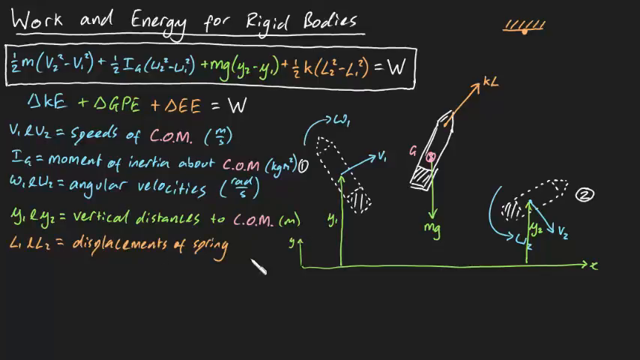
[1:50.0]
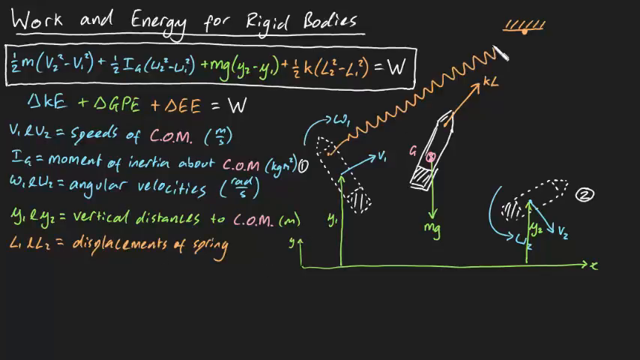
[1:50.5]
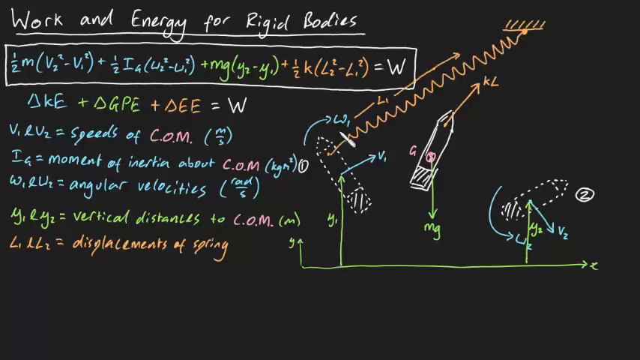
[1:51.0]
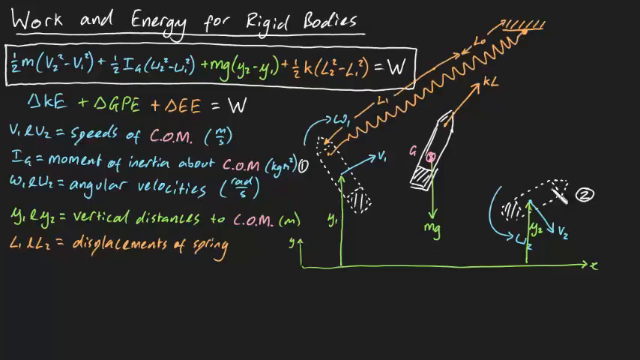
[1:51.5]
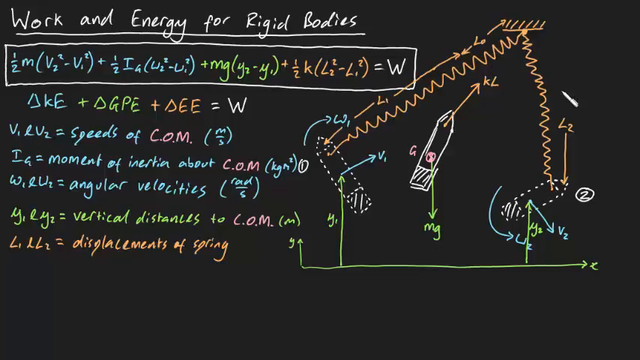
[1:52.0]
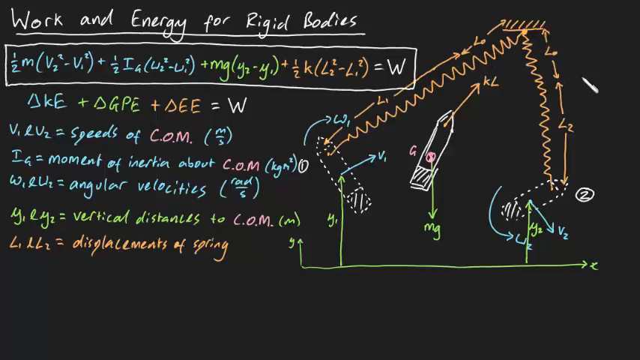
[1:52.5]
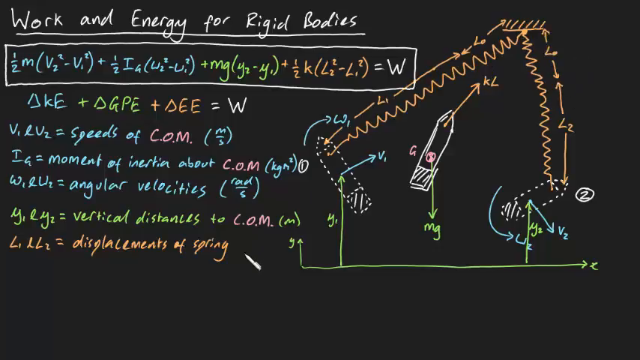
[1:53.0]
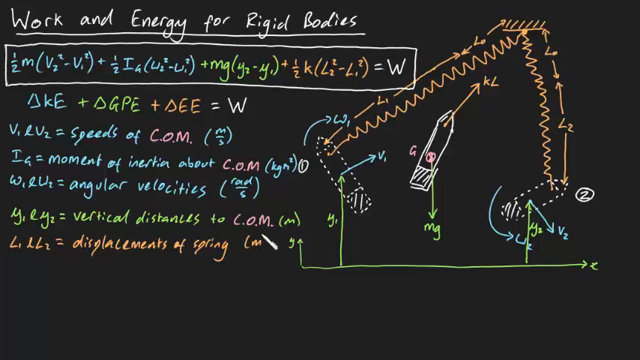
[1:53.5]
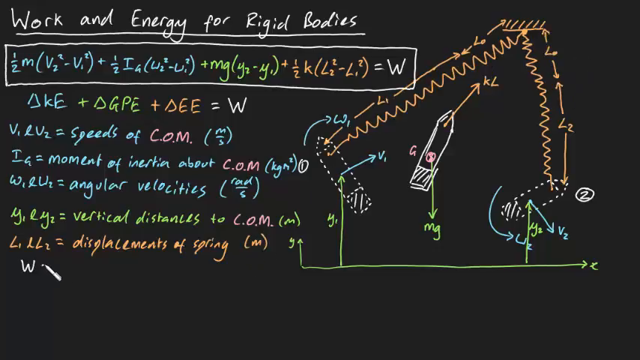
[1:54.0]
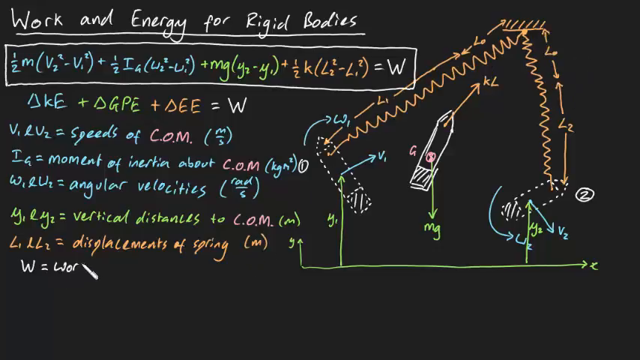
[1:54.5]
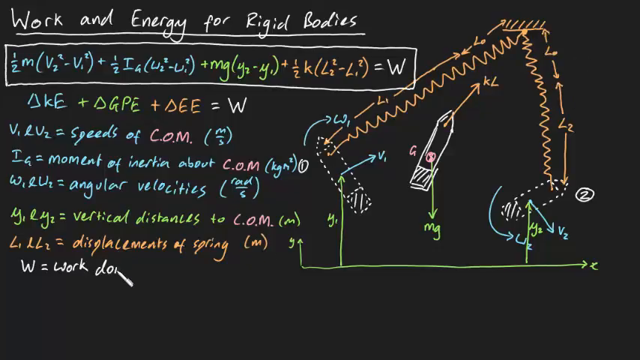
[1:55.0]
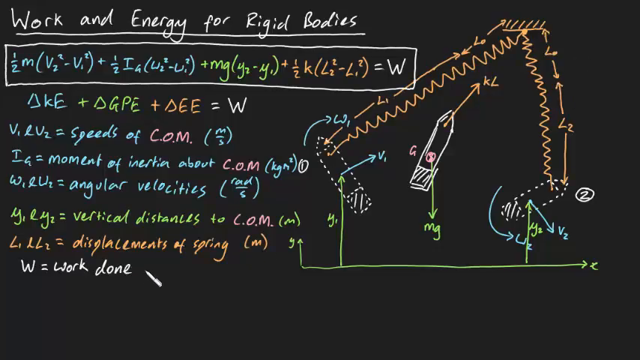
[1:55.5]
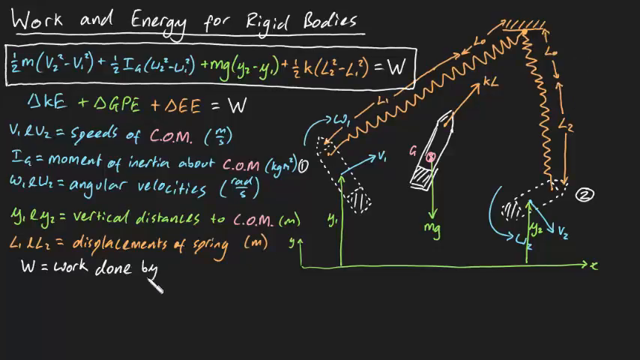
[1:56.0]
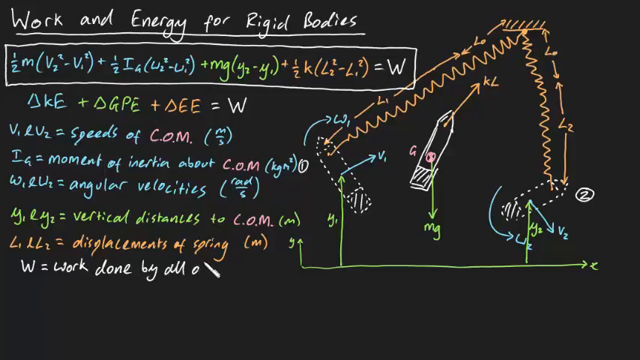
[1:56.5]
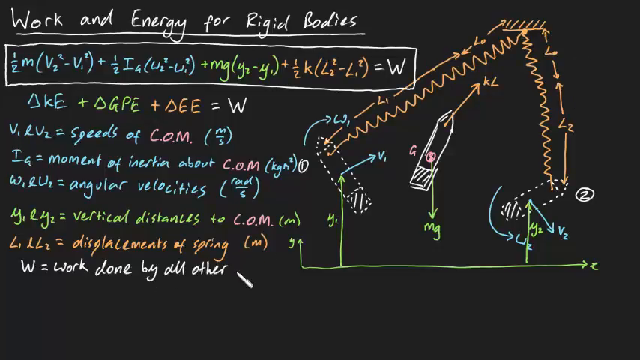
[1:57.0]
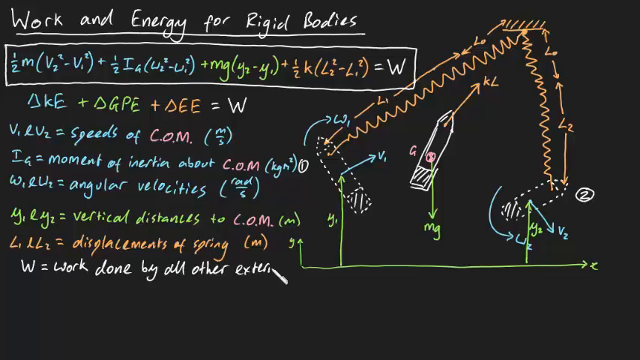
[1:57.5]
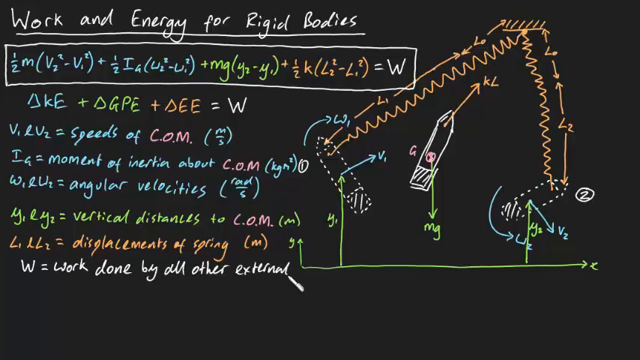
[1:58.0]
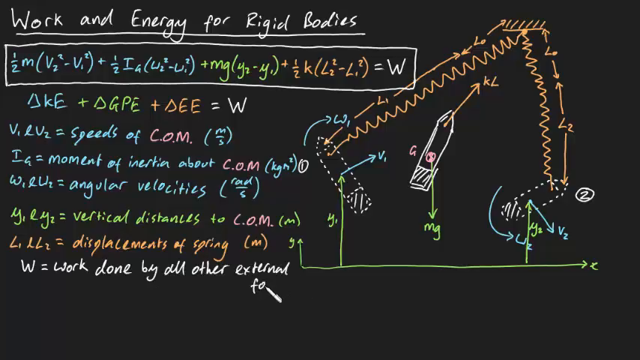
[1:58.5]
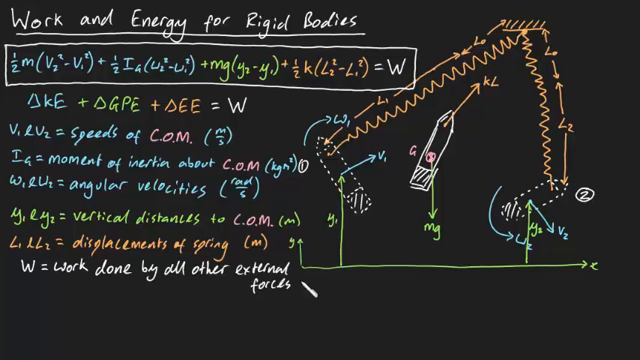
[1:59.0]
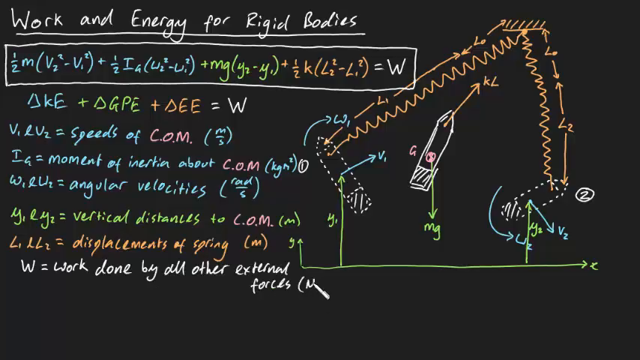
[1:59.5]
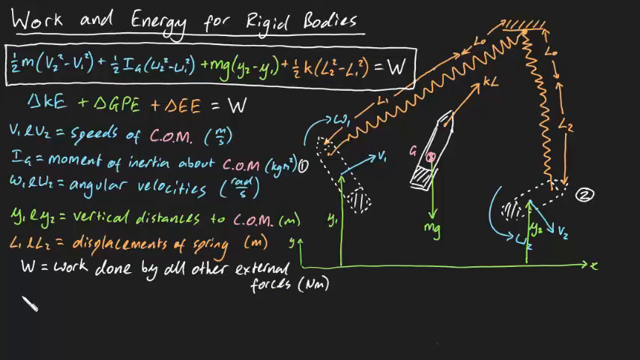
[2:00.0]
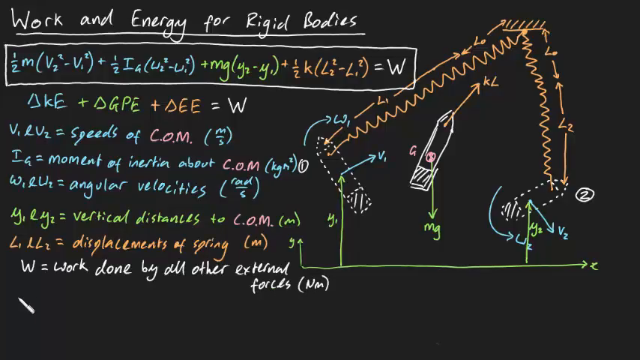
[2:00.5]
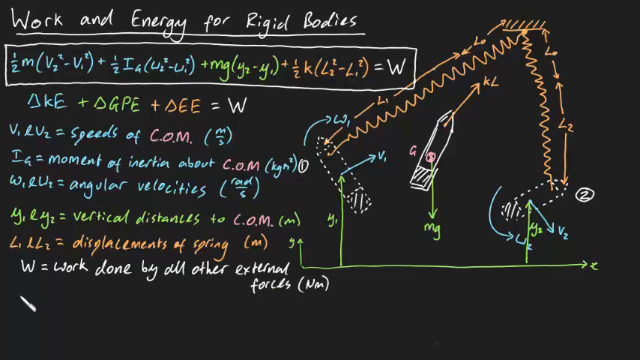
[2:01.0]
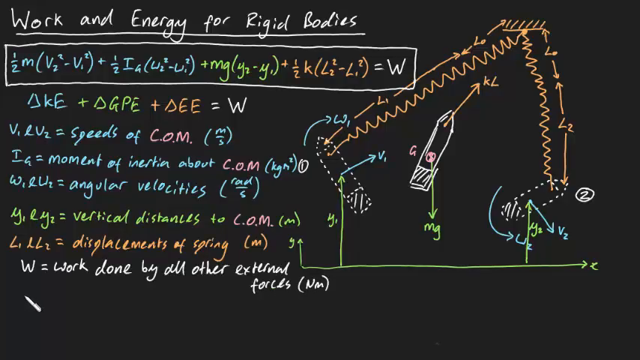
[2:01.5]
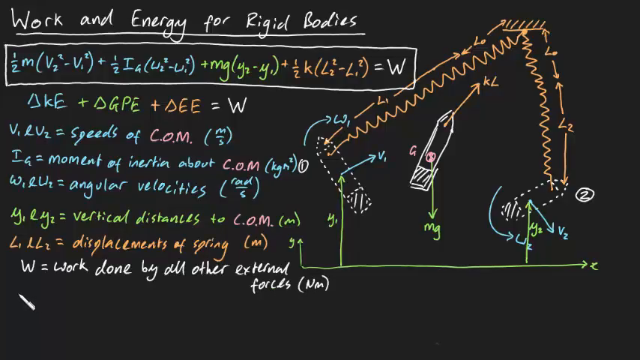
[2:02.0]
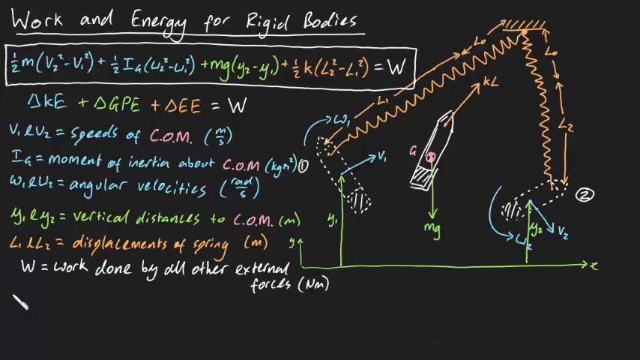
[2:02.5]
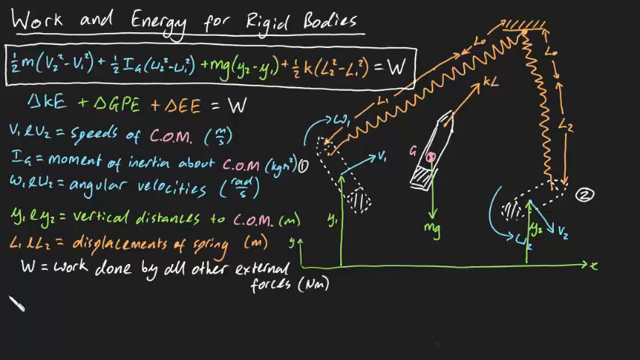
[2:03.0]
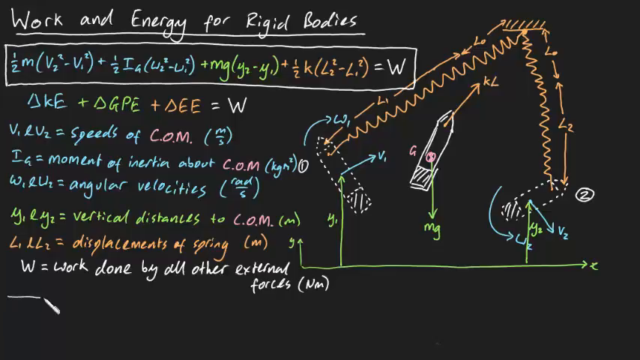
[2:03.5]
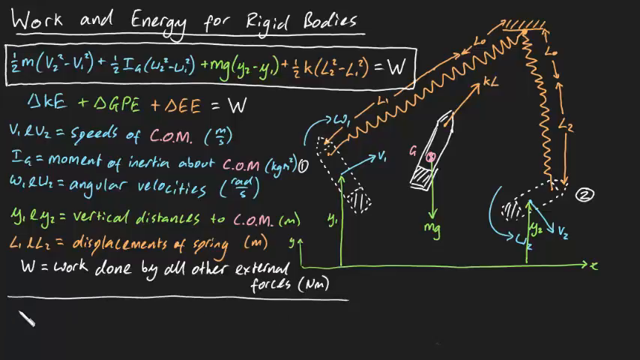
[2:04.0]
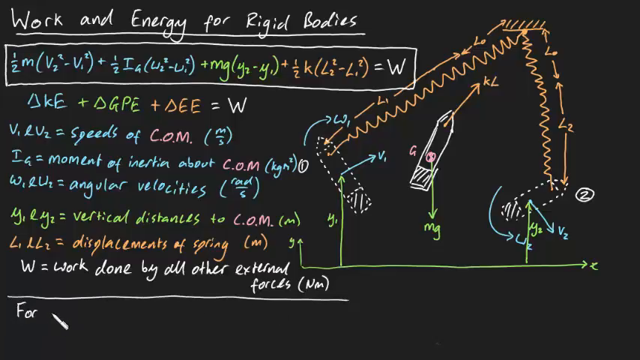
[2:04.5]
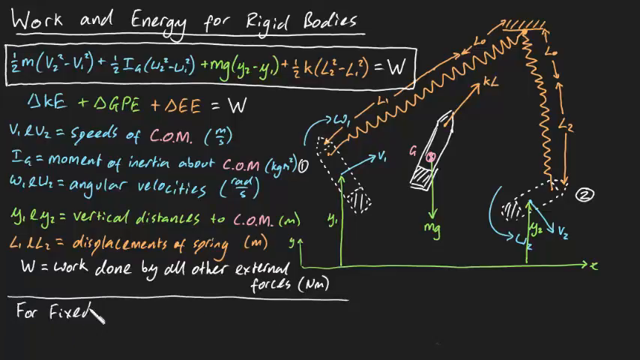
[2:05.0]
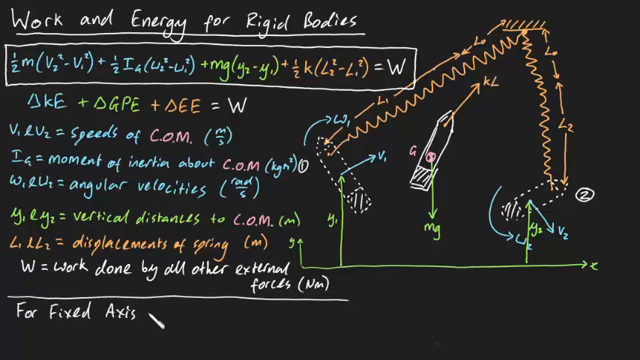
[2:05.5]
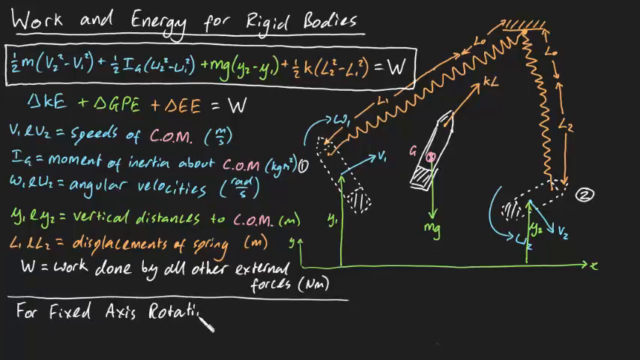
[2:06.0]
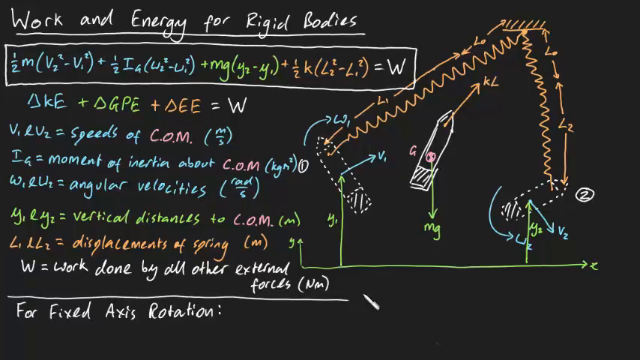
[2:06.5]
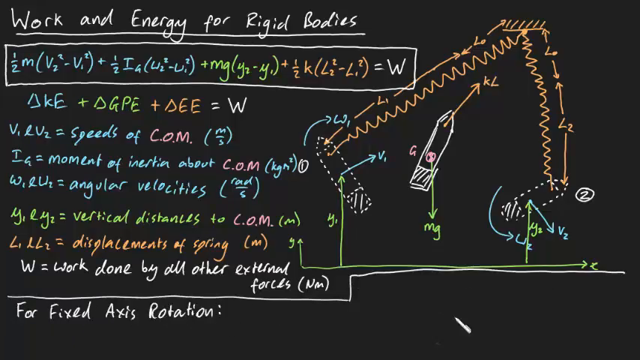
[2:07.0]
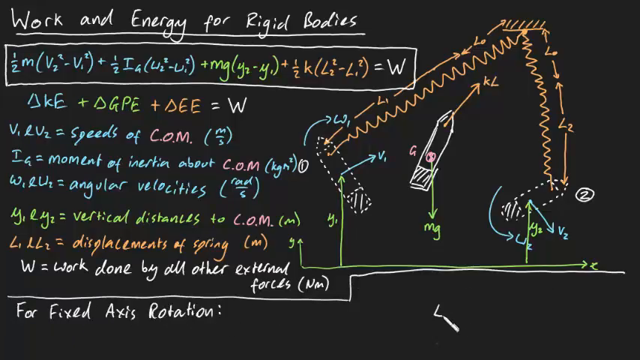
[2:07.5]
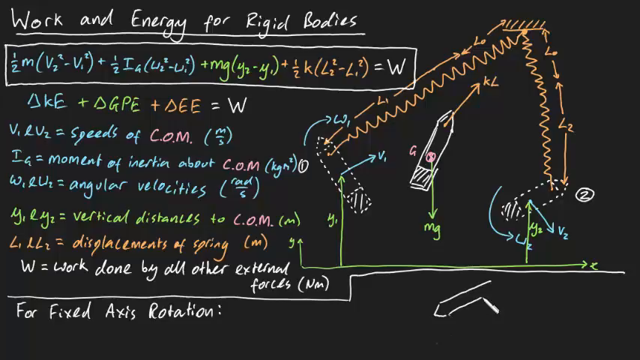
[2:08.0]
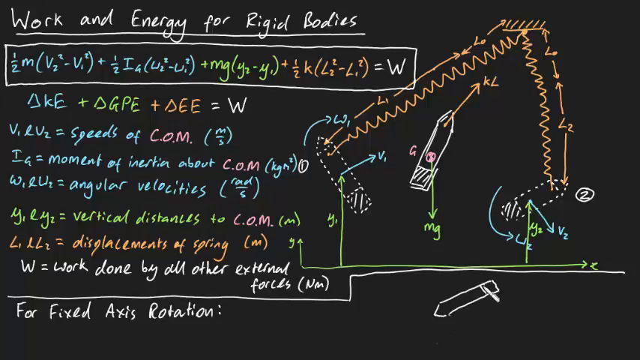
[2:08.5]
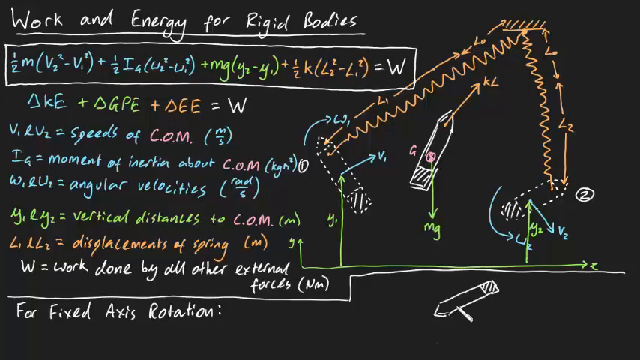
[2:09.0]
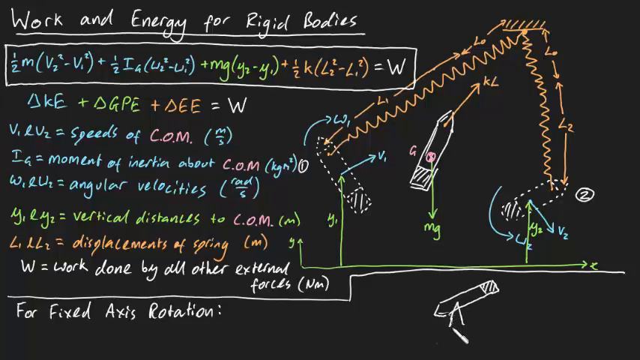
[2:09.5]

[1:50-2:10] The white cursor moves very quickly from the left side of the frame to the center and over to the right side. In orange, it draws several arrows starting from the objects and ending at the link shown in the upper part. The cursor then returns to the left side of the screen and writes words in white, proceeding from top to bottom, and then draws a continuous horizontal white line. In the lower right part of the screen, the white cursor draws another object in white, similar to the ones drawn before, with a continuous line. The cursor moves very quickly, but its movement is fluid and easy to follow.